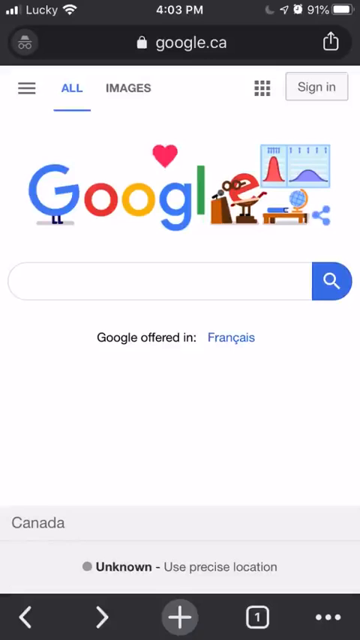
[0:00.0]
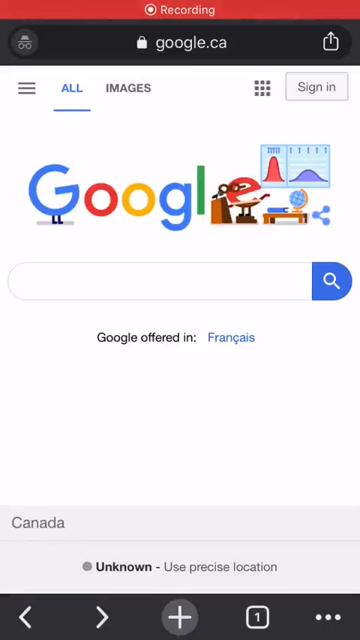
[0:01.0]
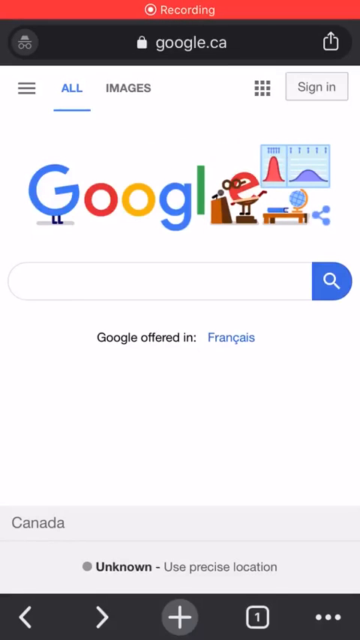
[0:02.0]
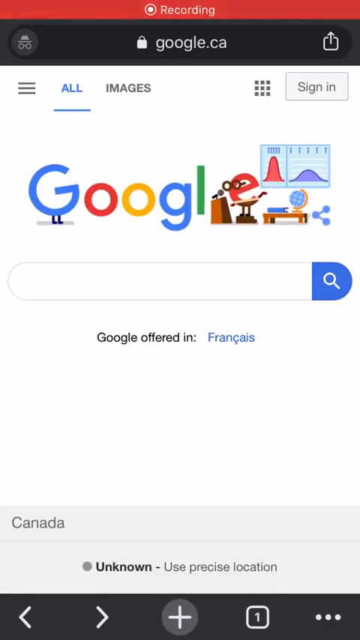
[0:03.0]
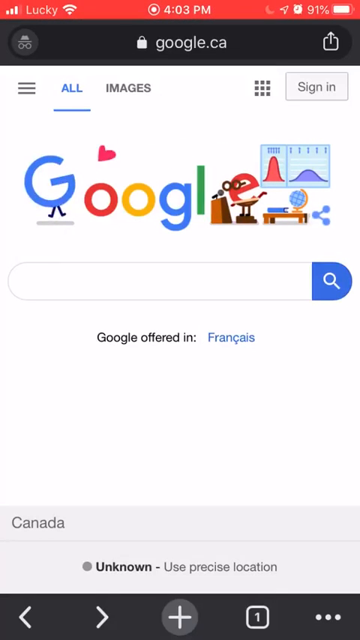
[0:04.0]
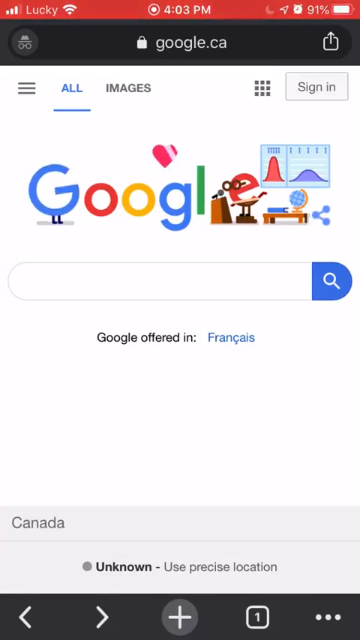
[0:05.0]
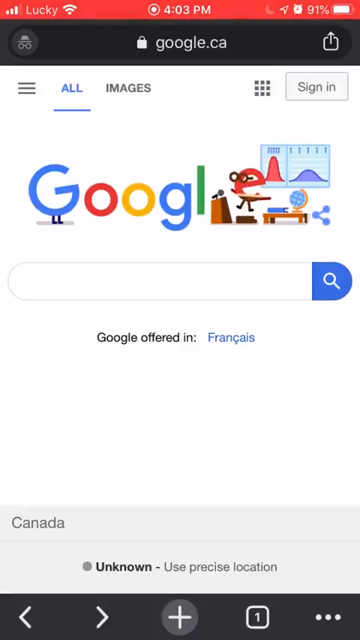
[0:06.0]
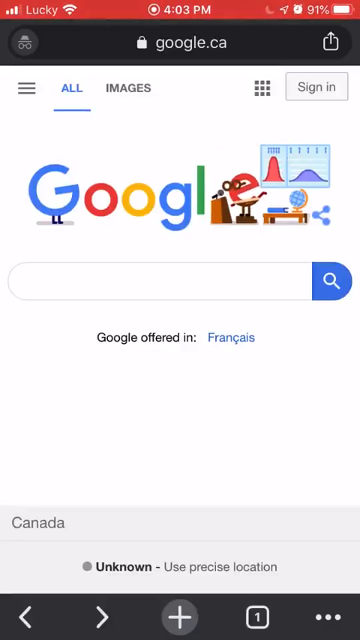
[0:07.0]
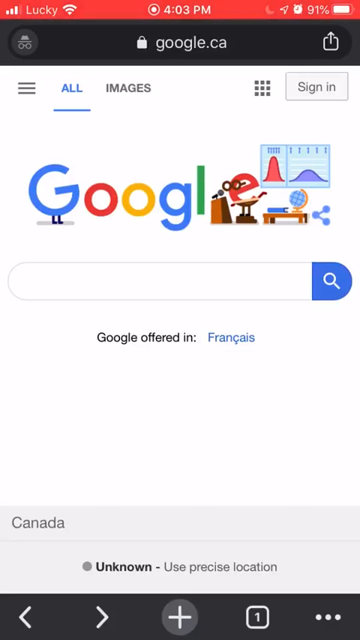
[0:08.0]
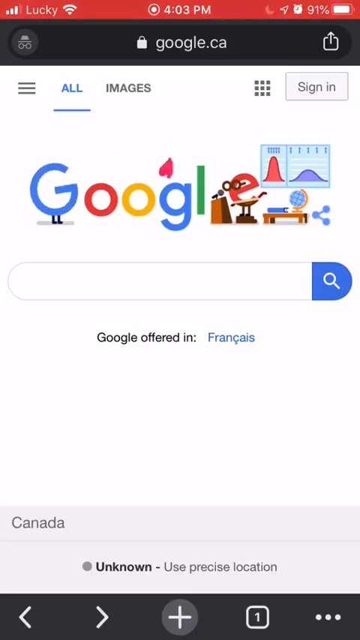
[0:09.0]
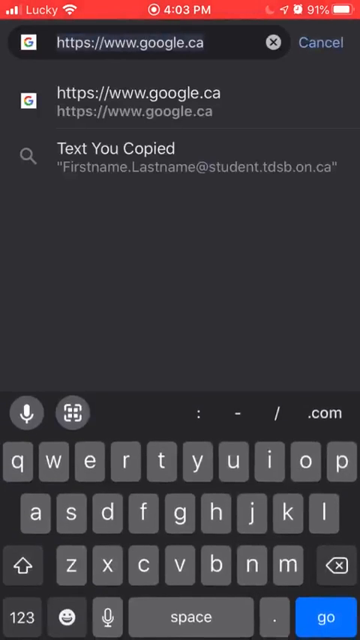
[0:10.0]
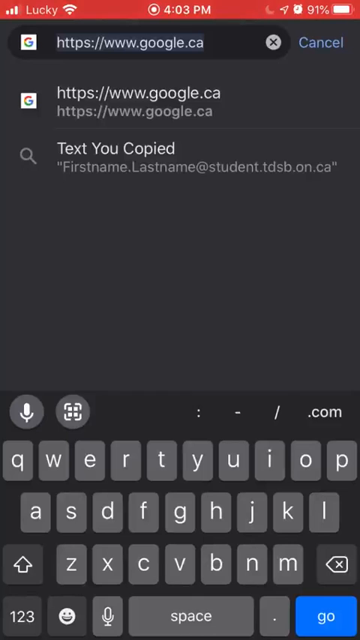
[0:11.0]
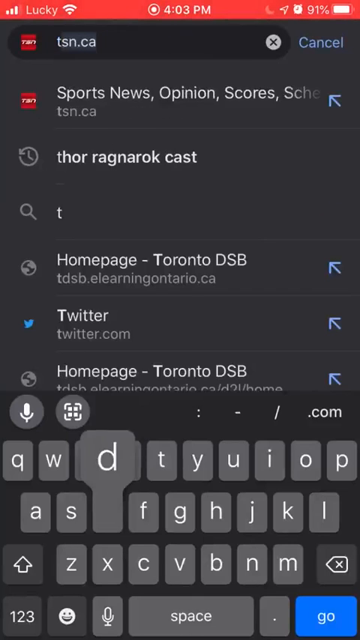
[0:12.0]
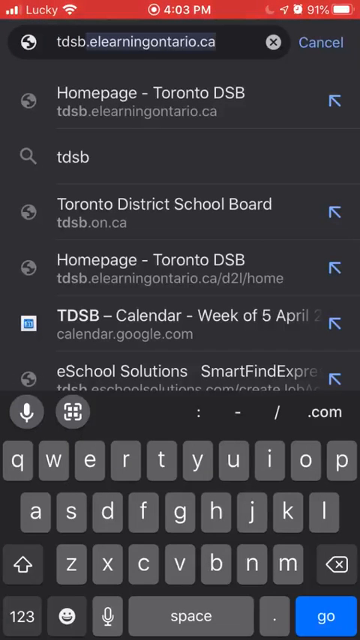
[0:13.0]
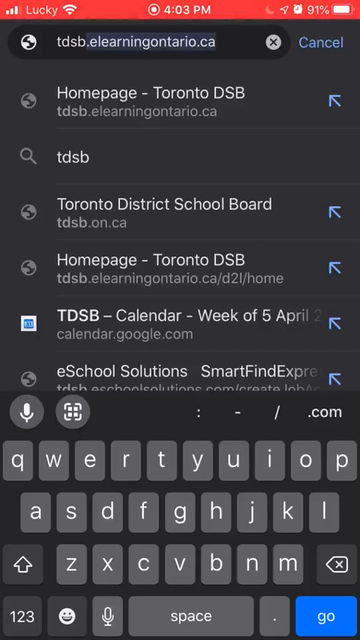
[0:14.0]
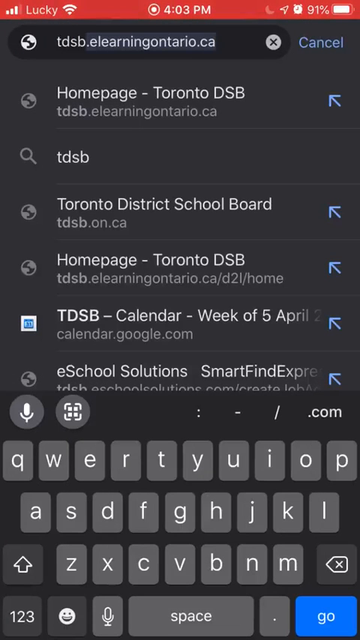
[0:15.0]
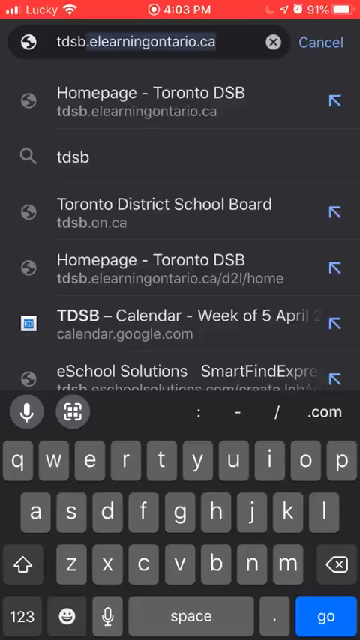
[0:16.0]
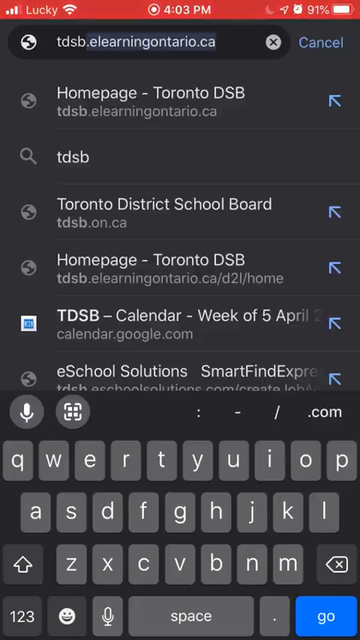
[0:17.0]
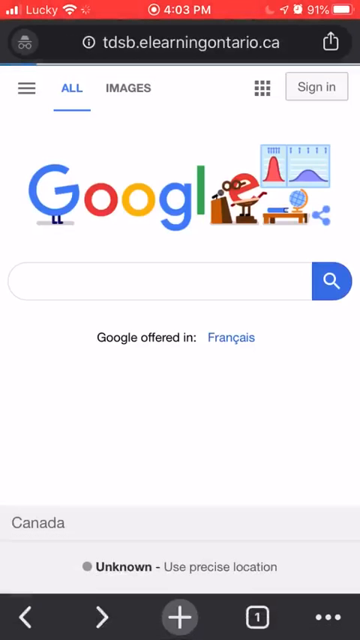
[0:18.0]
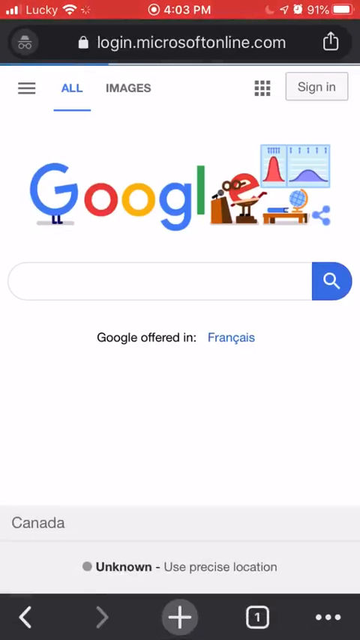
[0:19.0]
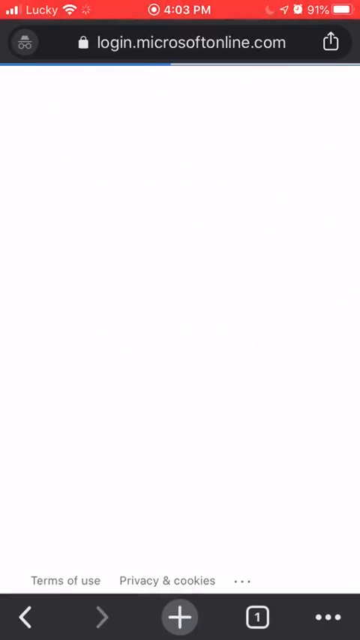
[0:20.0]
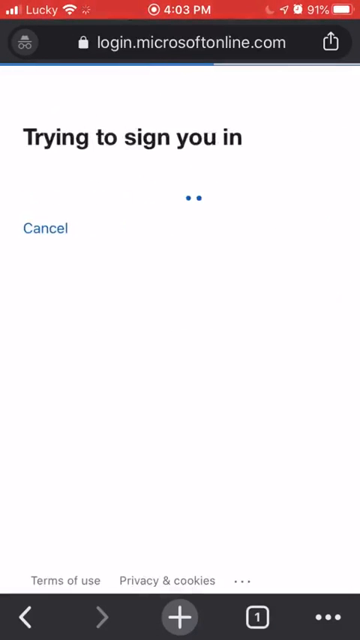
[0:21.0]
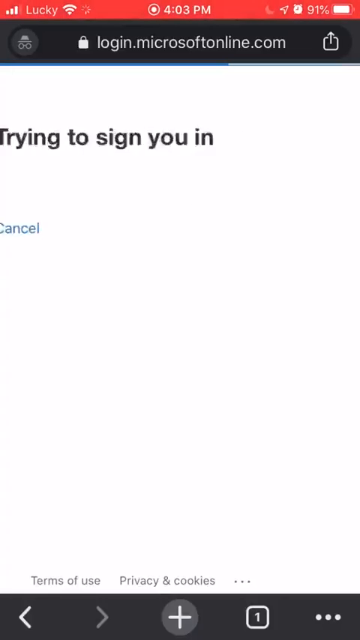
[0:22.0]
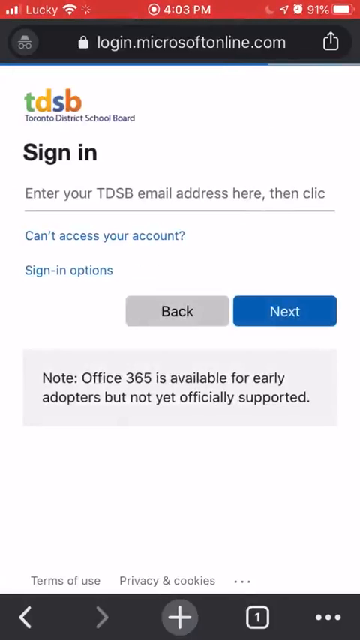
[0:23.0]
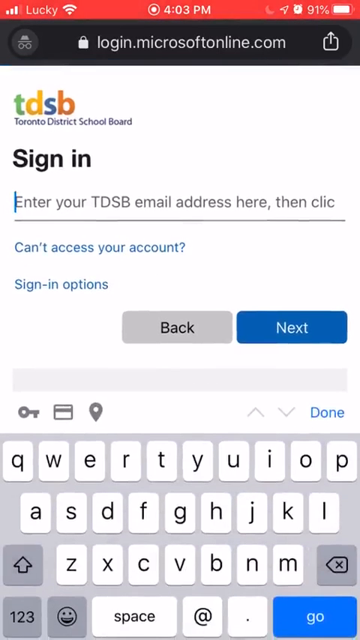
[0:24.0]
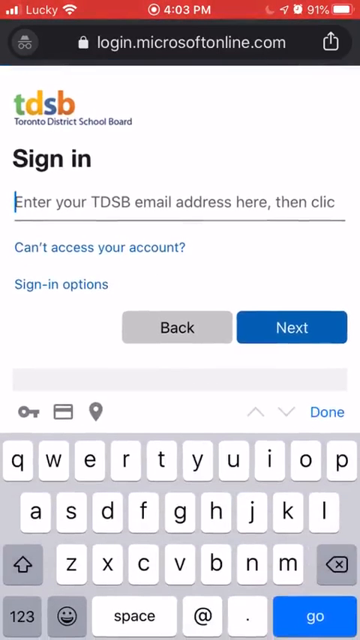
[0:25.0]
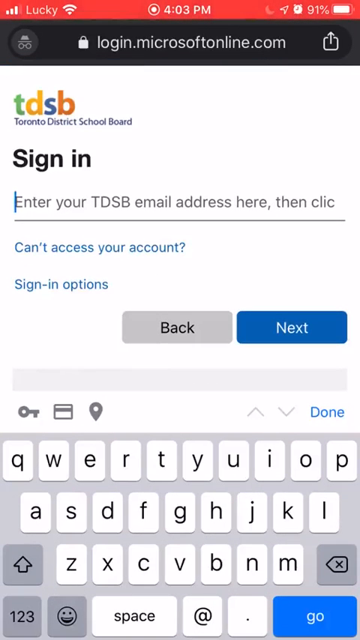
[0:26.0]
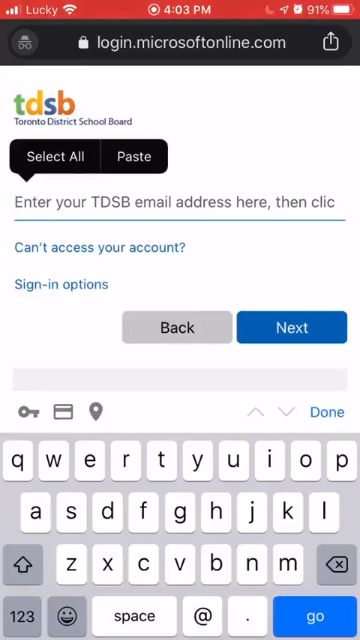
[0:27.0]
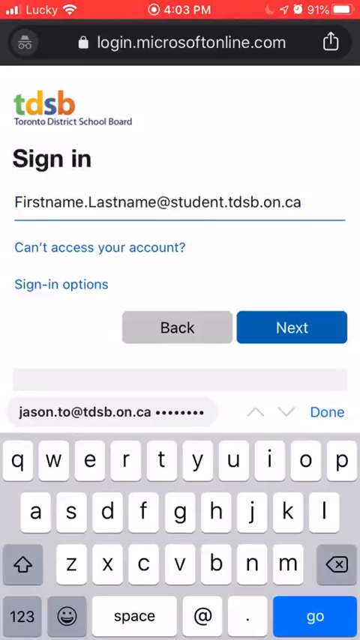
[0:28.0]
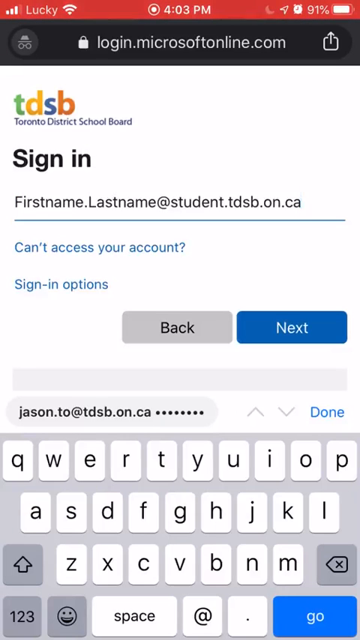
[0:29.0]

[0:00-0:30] A mobile browser shows the URL google.ca with its search bar present. The main page features the colourful animated Google logo, with a red heart towering over it, and the e, kind of personified, in red at the far right end of the logo. The user then apparently enters another URL, tdsb.elearningontario.ca, and goes there while the phone is clearly connected to Wi-Fi. The page transitions to a Microsoft single sign-in for the TDSB portal, where an email address is pasted into the sign-in flow.